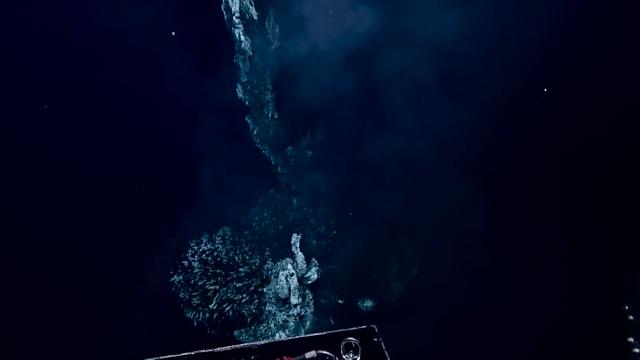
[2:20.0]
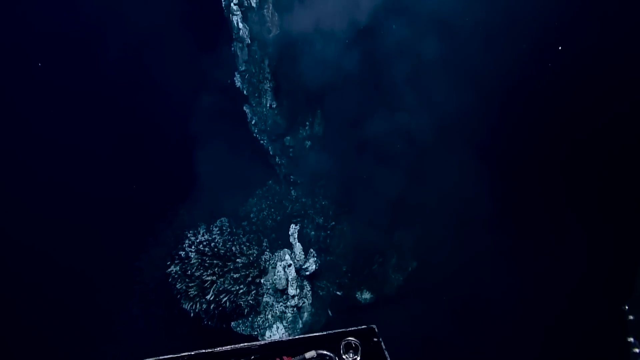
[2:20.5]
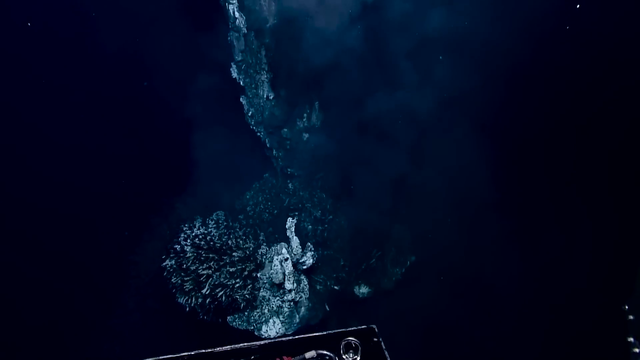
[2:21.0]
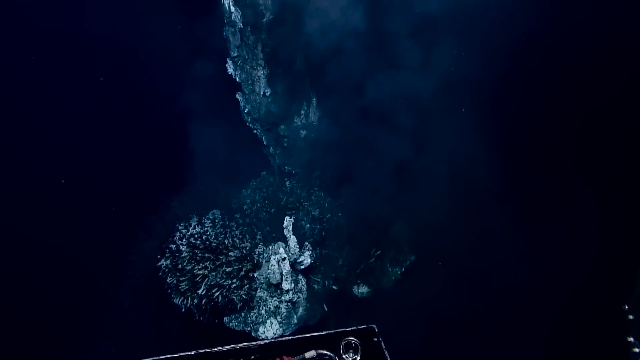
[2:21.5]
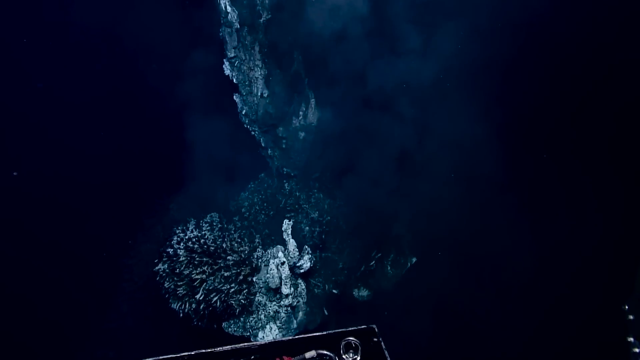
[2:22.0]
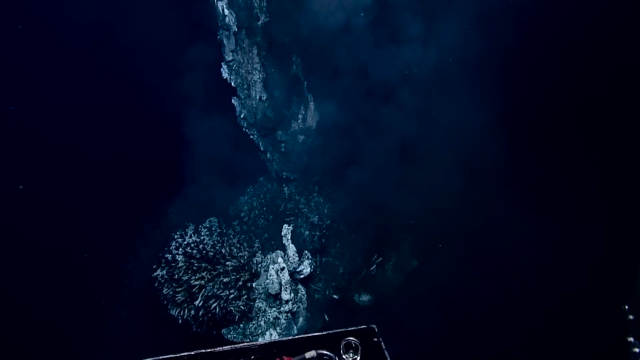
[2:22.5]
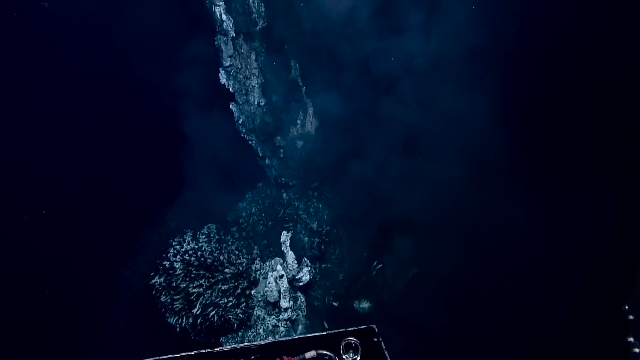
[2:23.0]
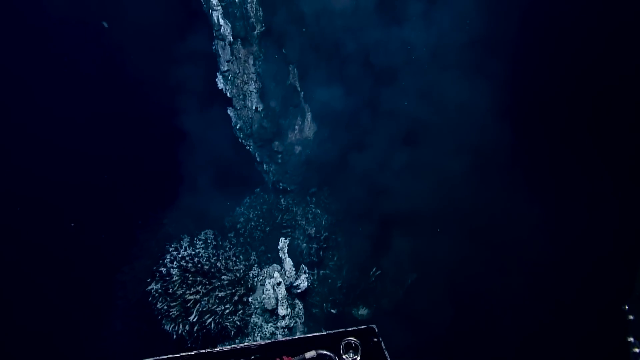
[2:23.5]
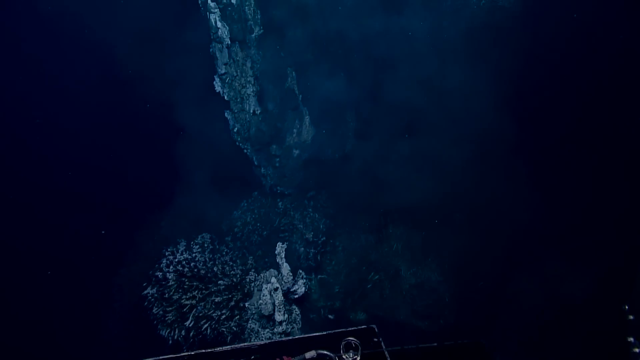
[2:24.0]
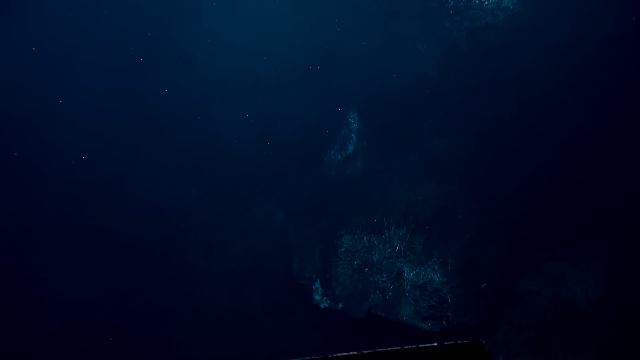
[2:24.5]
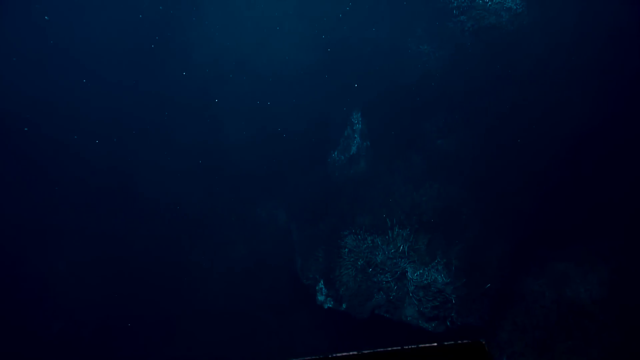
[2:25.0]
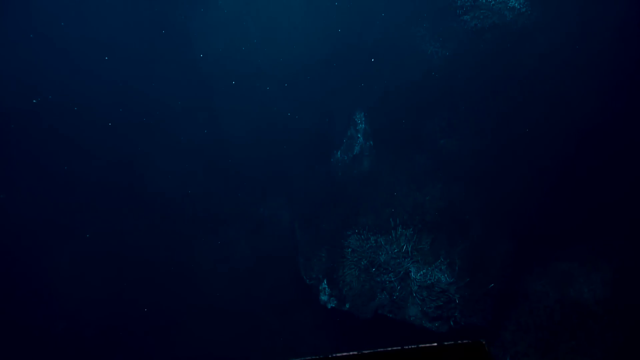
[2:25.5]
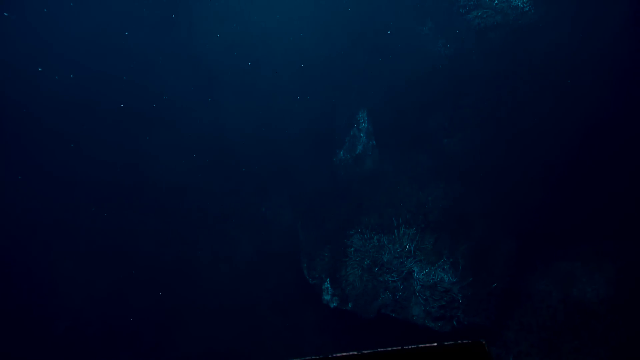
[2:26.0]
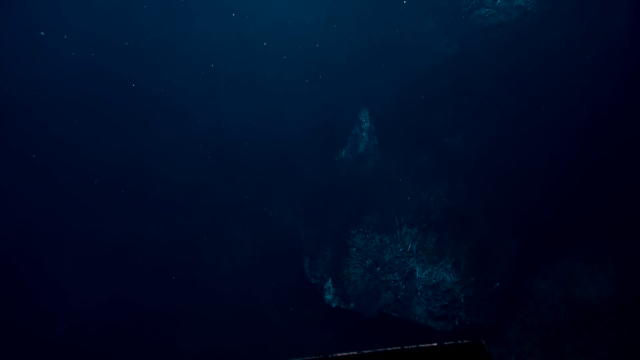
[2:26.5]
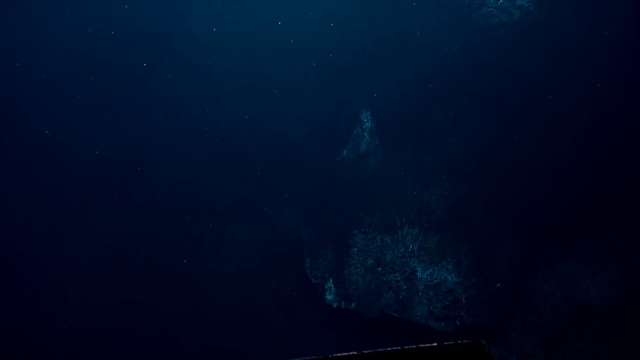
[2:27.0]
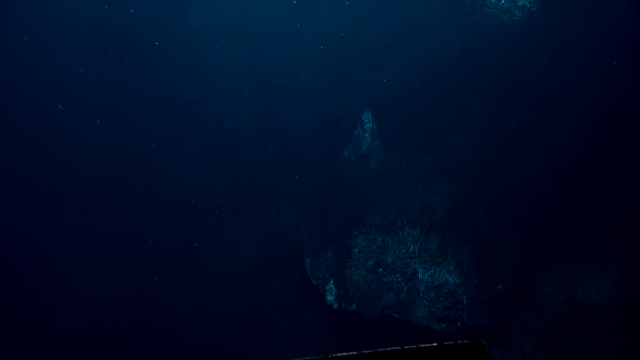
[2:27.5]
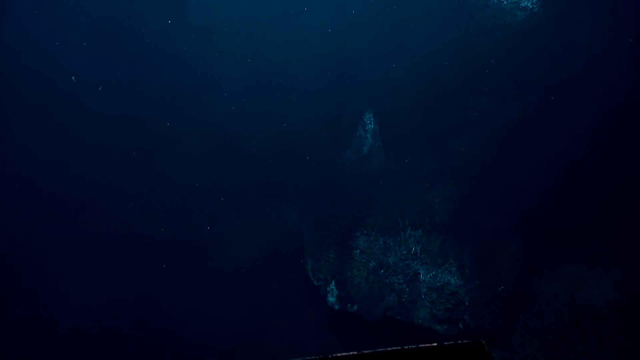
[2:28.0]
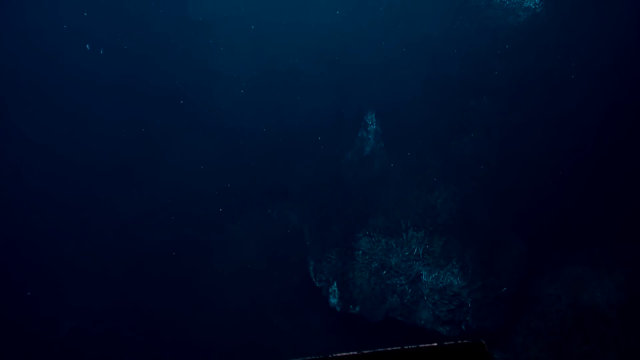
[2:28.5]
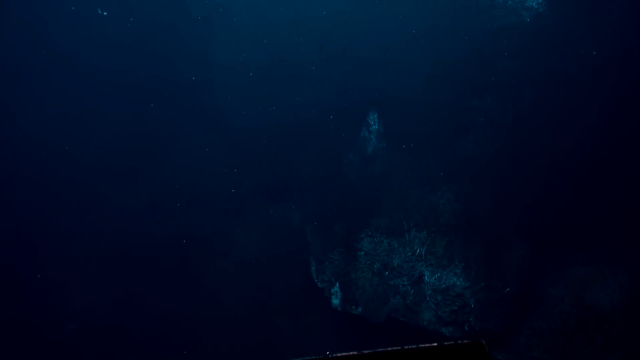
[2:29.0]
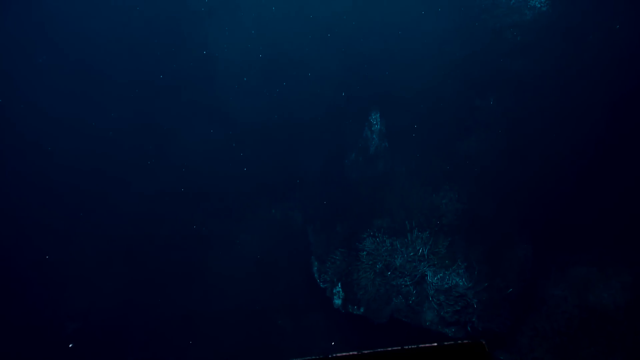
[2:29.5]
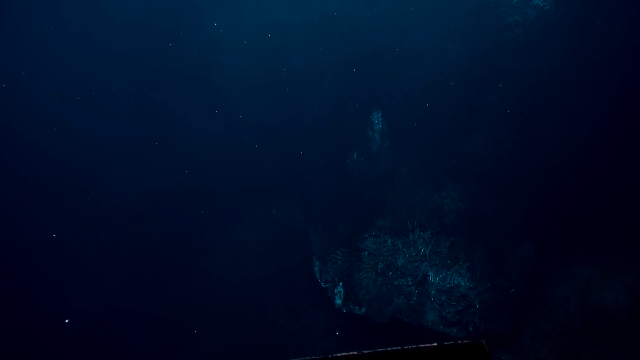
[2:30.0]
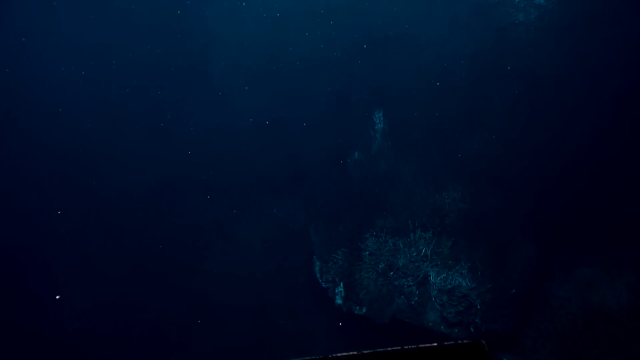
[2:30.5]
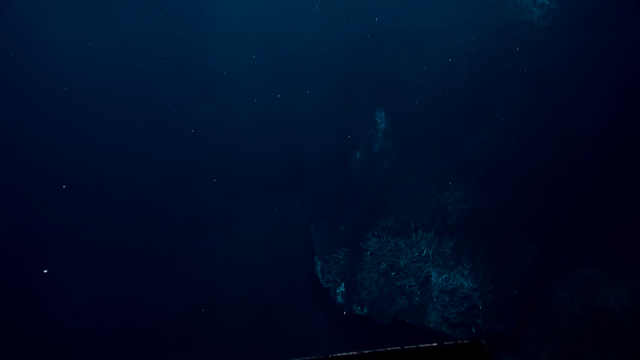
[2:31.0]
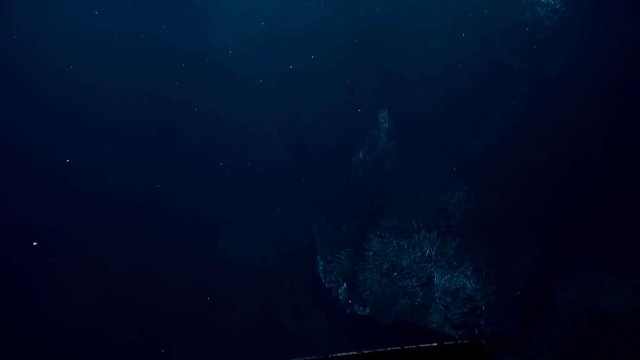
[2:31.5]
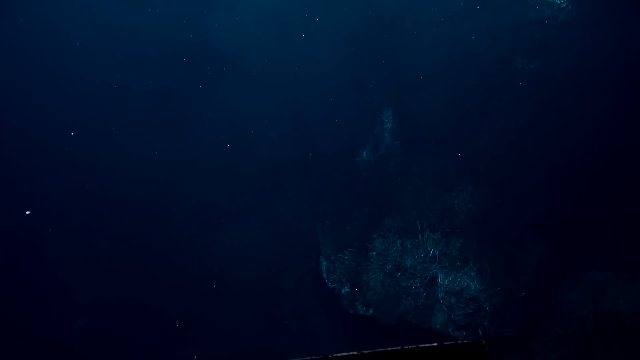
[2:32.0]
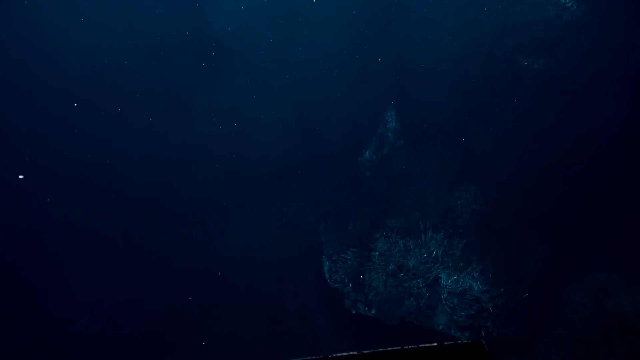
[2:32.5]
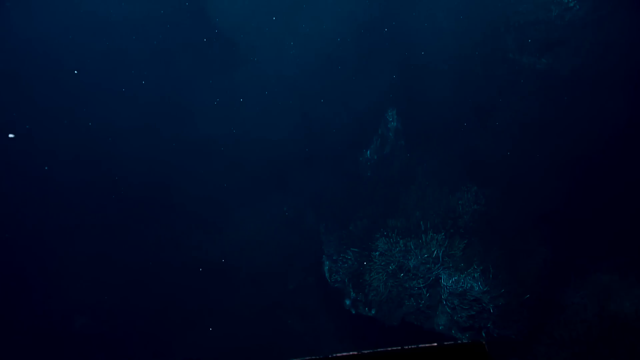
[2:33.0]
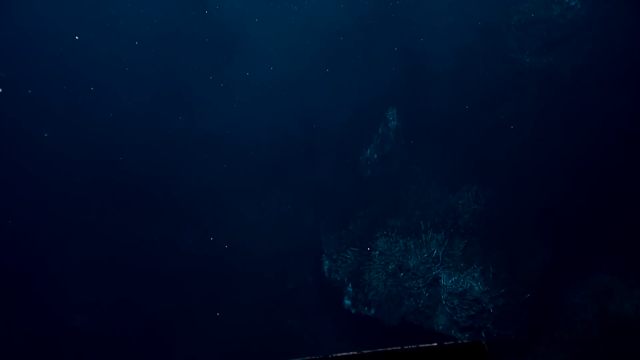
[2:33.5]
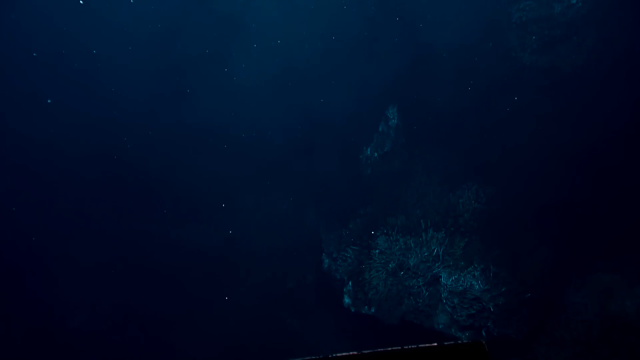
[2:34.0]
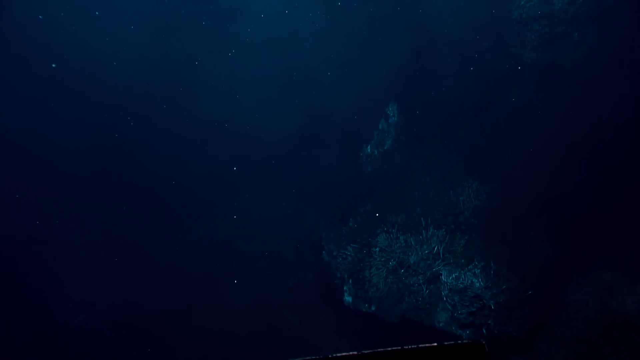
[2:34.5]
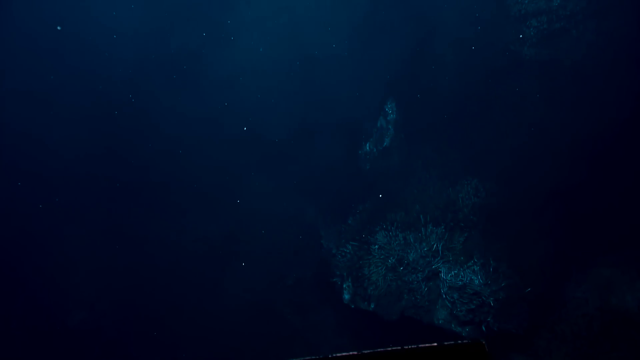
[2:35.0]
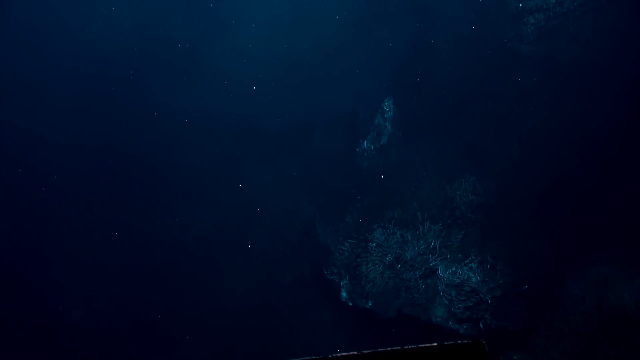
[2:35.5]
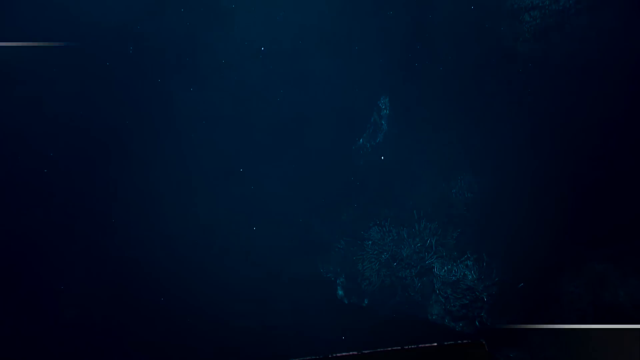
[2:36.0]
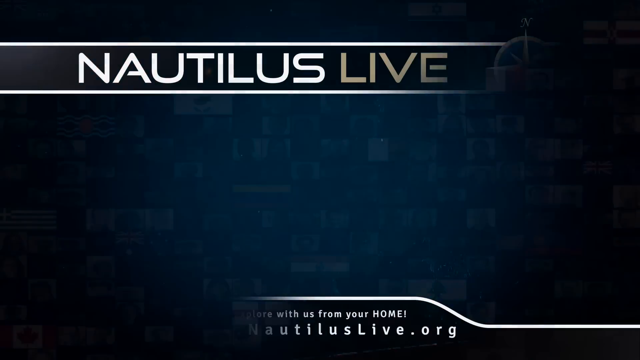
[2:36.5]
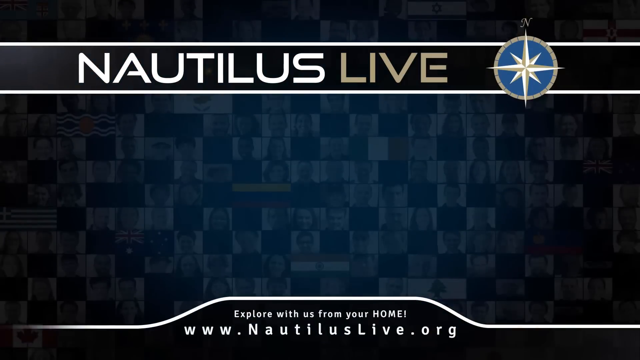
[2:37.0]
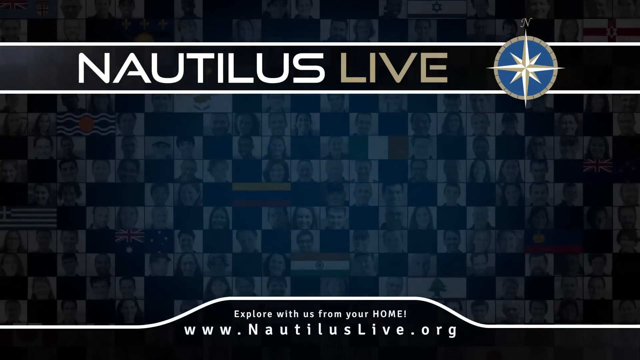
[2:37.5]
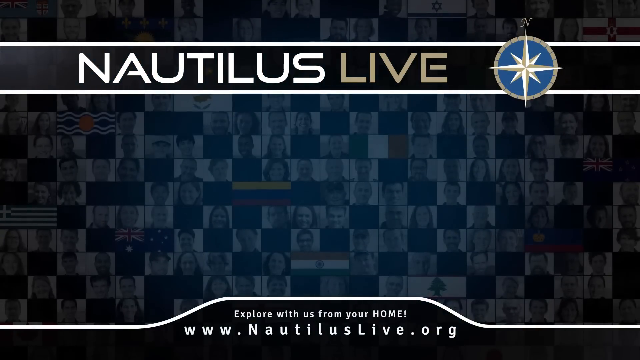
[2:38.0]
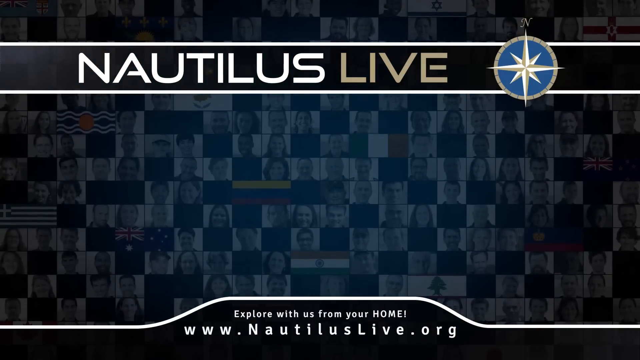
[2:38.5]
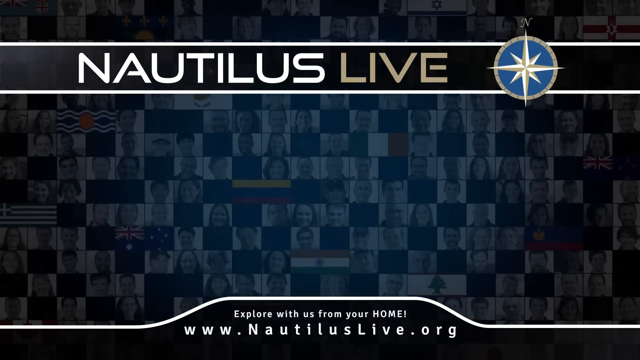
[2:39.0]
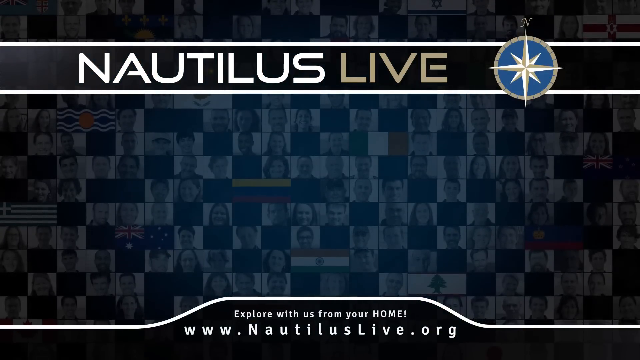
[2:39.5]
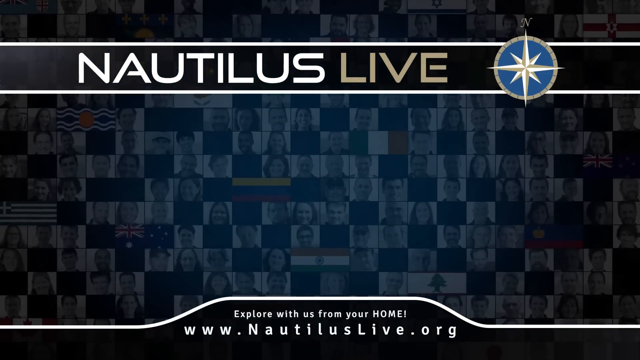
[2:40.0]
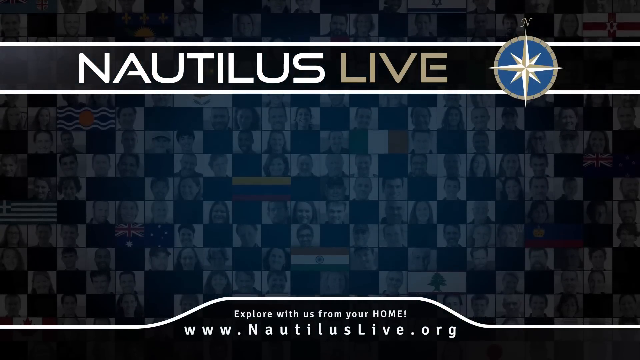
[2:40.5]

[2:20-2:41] Deep in the ocean, what looks like a large rock has coral around it. The rock looks very tall and appears to have silver and white mold. The background is very dark. Some very small creatures move upwards; they appear as black dots, and some of them look like worms. Then another view under the ocean shows more coral, very dark, with only a small blue light shining through, and more tiny white creatures moving upwards. Then the words "Nautilus Live" appear with the symbol of a circle with a white star, on a blue background. Behind the words are many pictures of people in small square blocks, with flags in between them. At the very bottom it says "explore with us from your home www.nautiluslive.org".